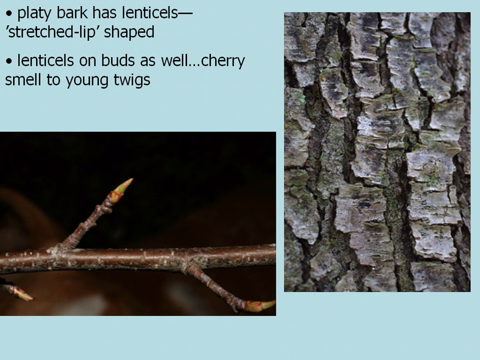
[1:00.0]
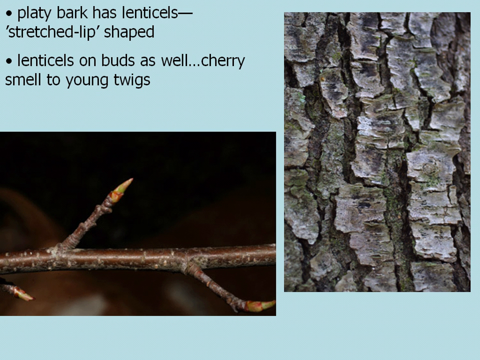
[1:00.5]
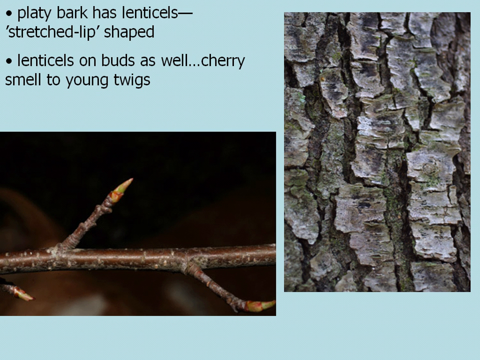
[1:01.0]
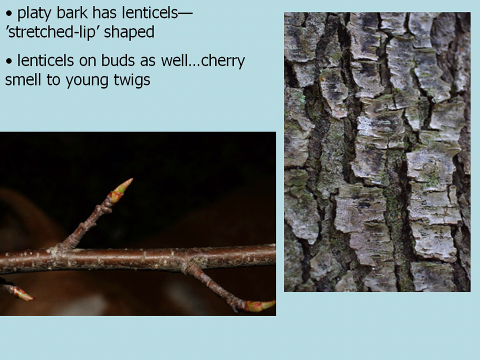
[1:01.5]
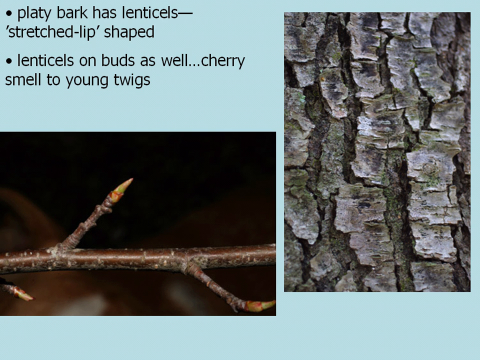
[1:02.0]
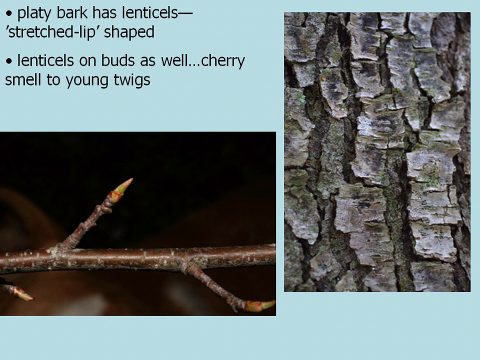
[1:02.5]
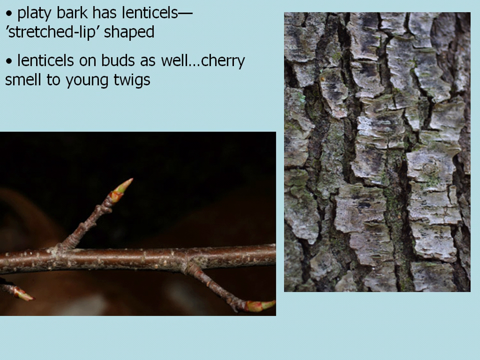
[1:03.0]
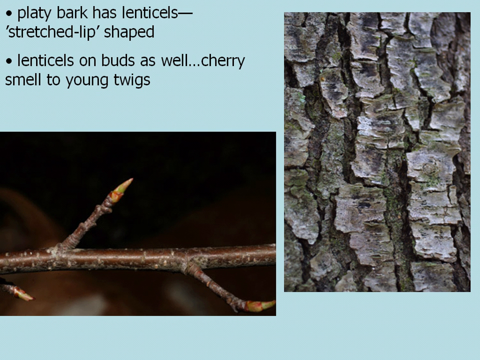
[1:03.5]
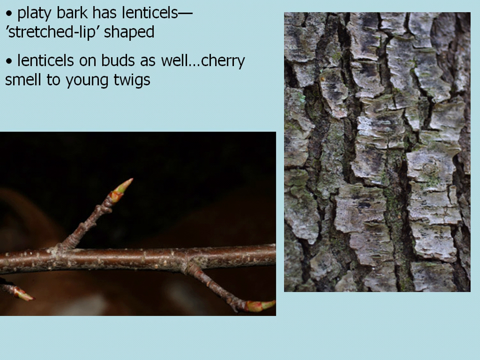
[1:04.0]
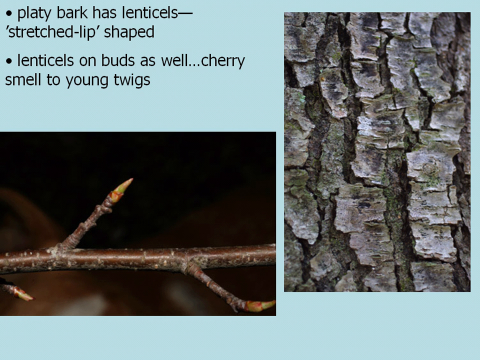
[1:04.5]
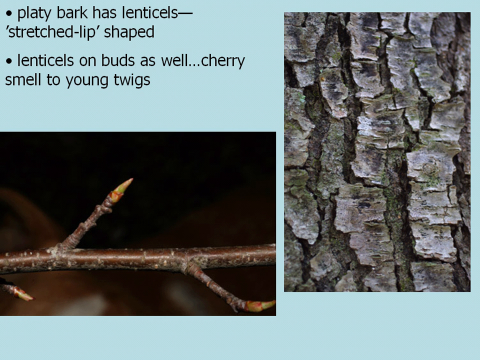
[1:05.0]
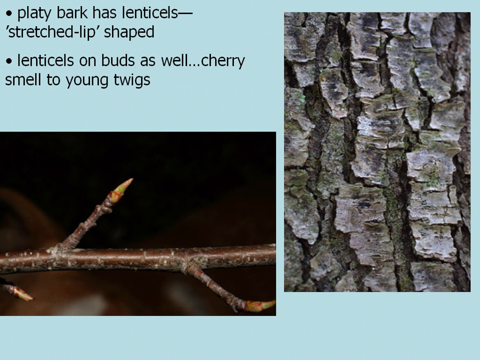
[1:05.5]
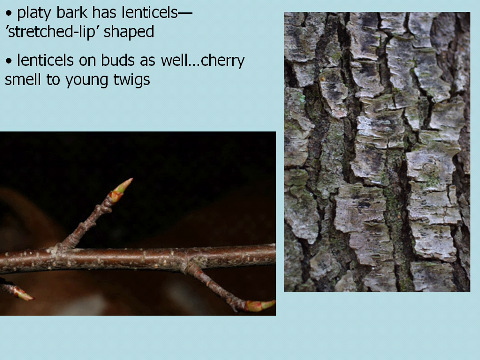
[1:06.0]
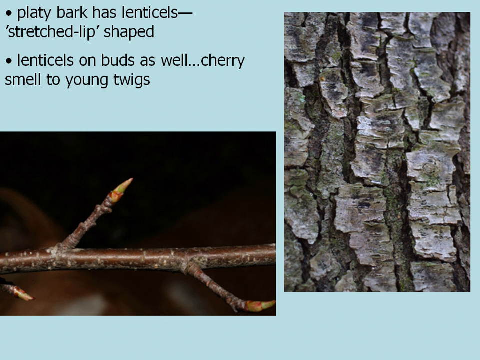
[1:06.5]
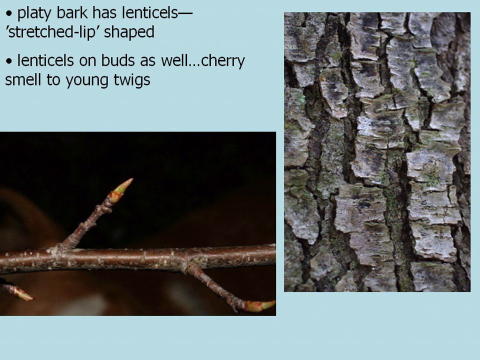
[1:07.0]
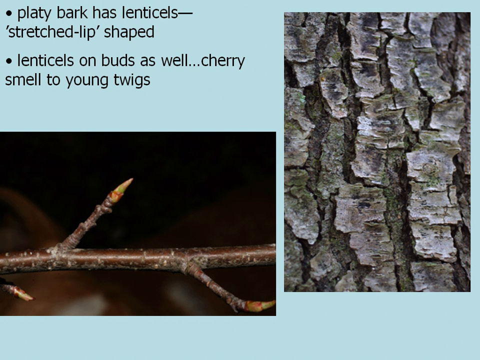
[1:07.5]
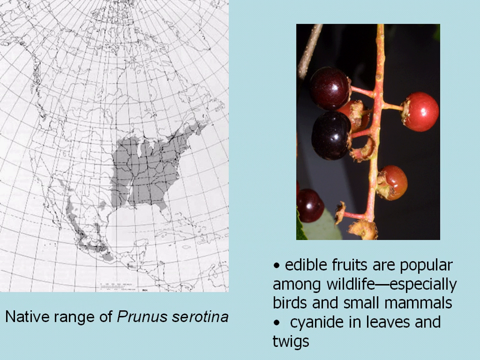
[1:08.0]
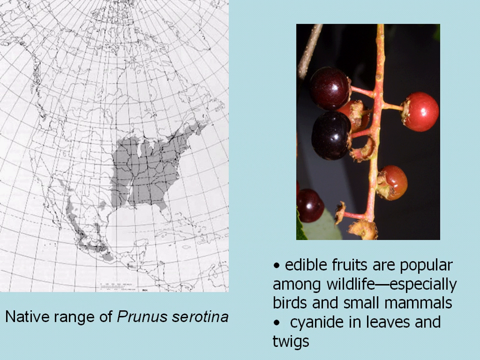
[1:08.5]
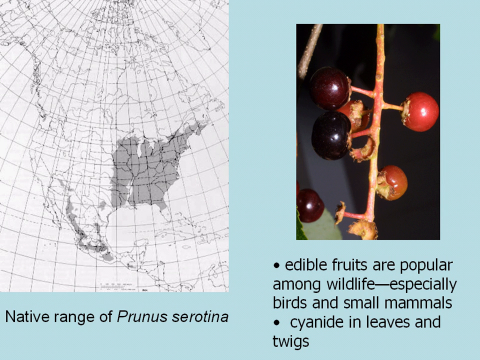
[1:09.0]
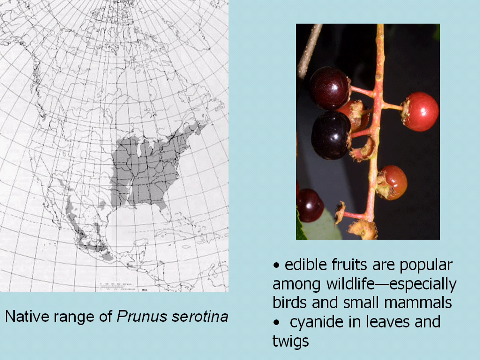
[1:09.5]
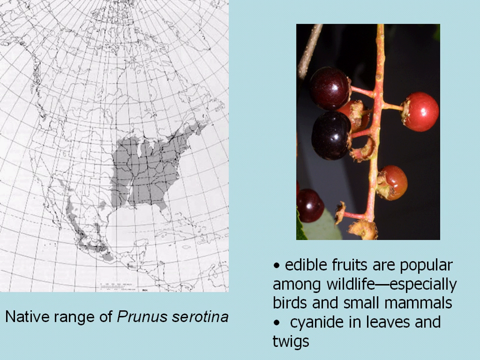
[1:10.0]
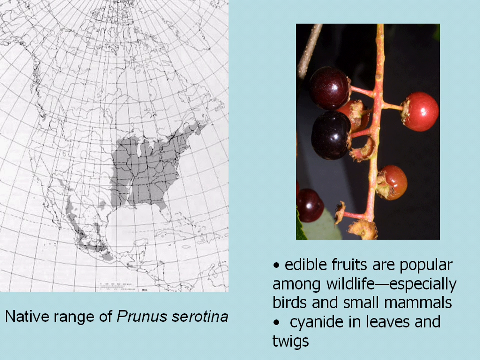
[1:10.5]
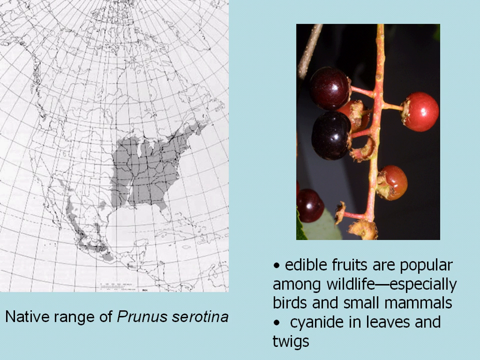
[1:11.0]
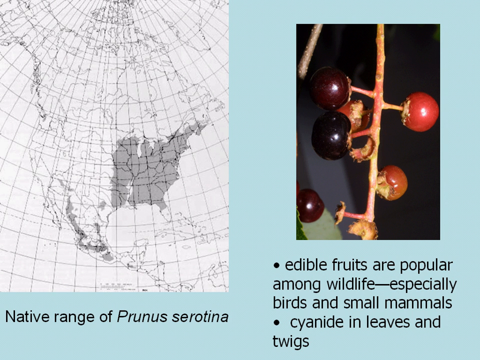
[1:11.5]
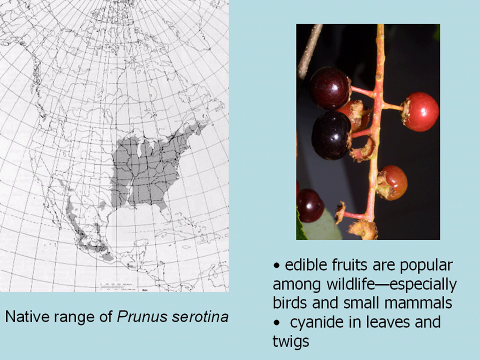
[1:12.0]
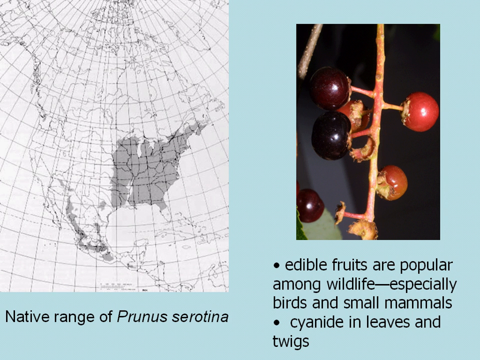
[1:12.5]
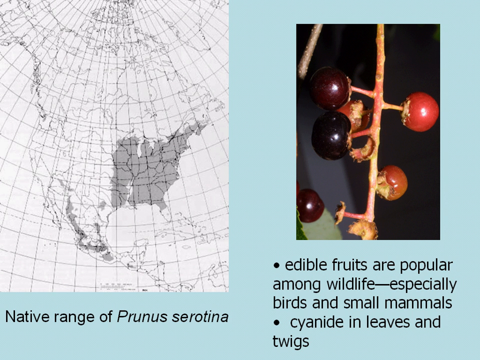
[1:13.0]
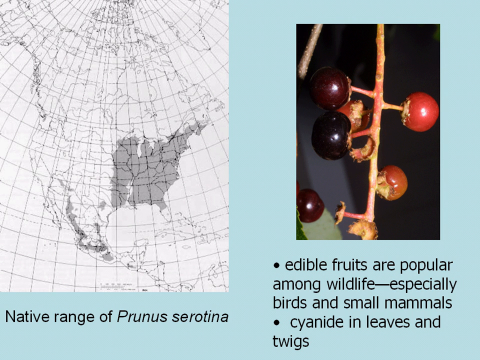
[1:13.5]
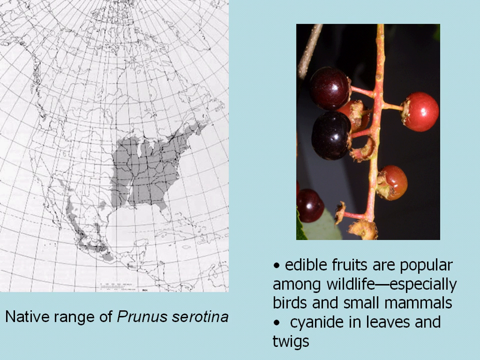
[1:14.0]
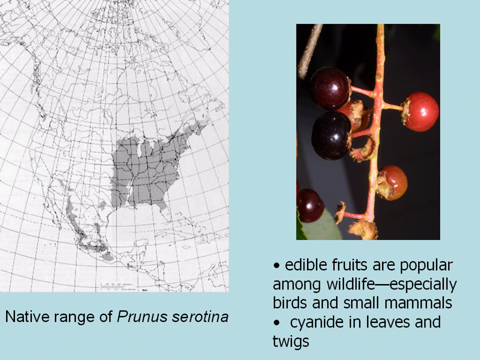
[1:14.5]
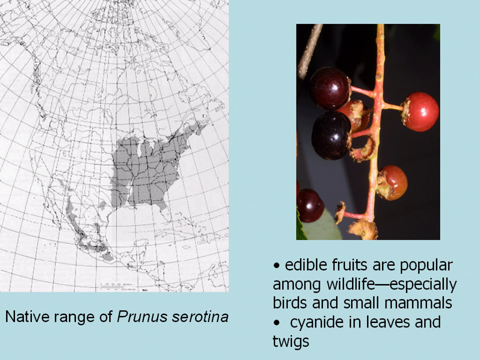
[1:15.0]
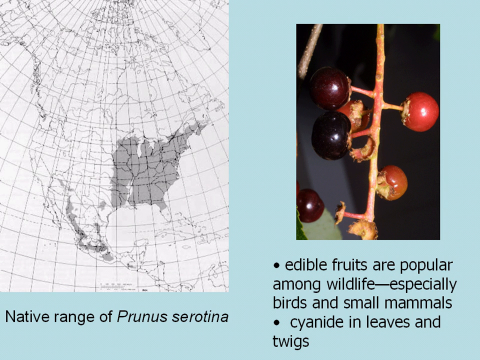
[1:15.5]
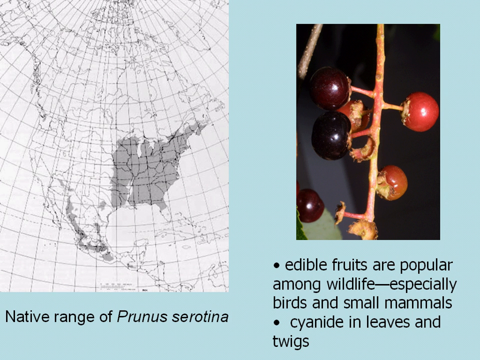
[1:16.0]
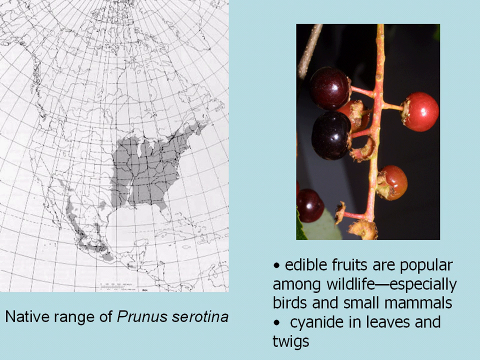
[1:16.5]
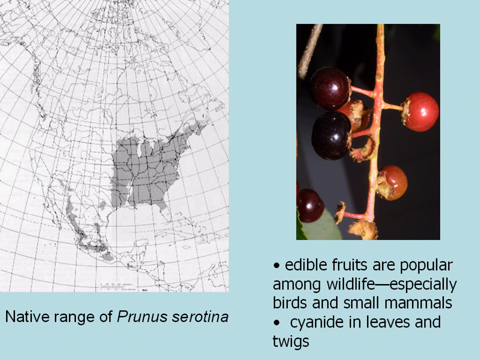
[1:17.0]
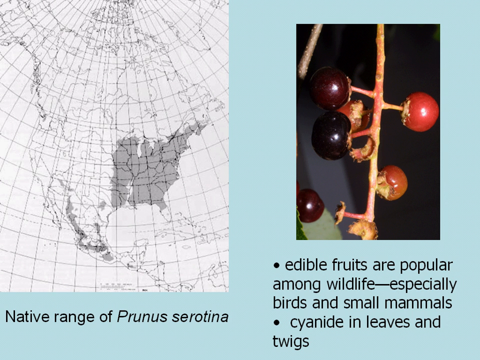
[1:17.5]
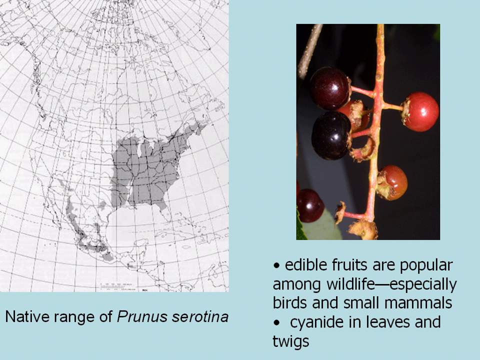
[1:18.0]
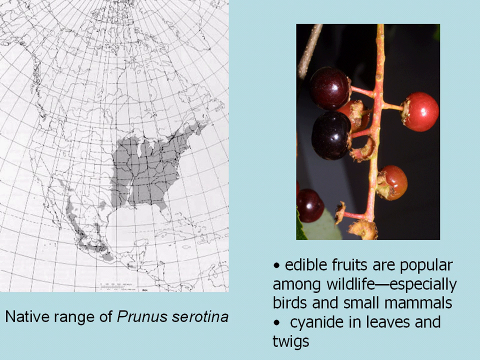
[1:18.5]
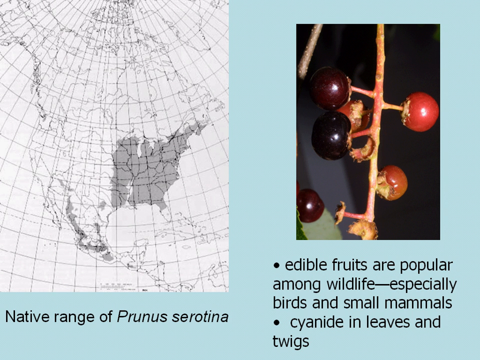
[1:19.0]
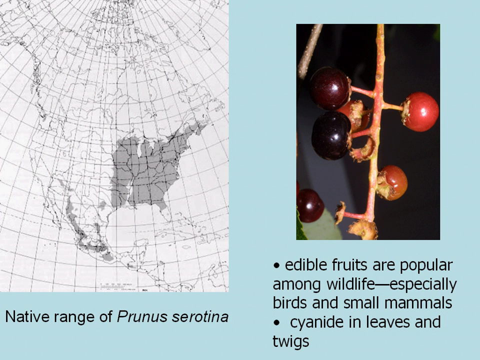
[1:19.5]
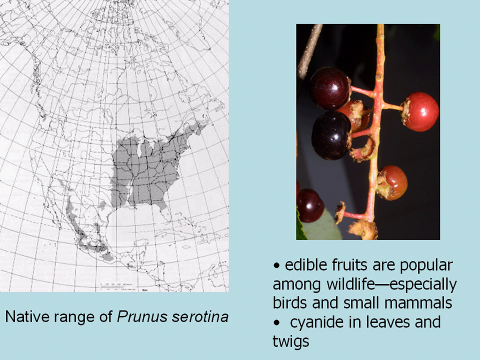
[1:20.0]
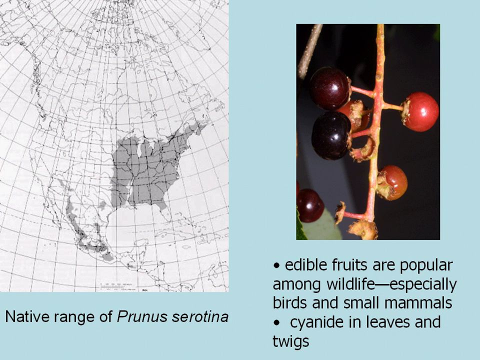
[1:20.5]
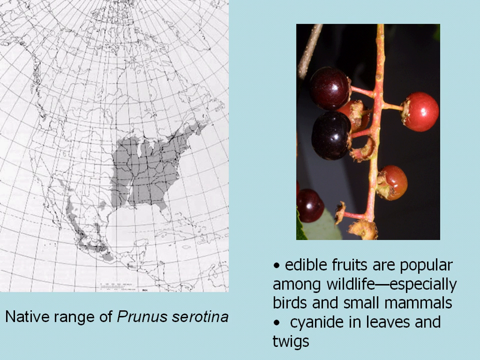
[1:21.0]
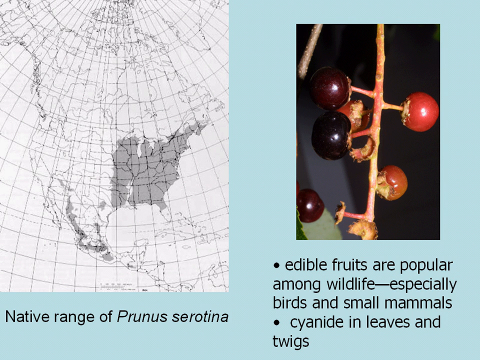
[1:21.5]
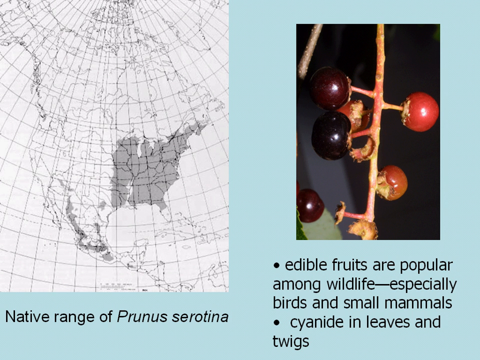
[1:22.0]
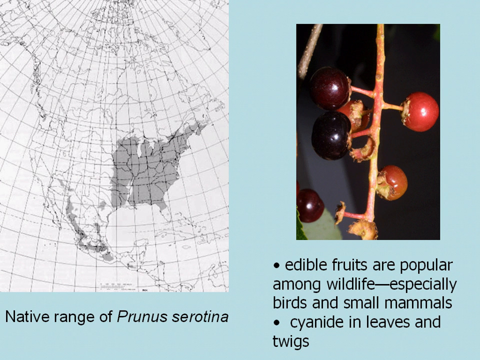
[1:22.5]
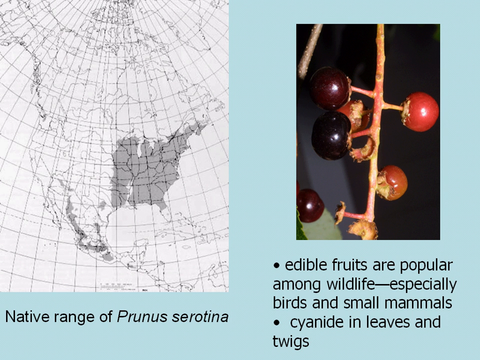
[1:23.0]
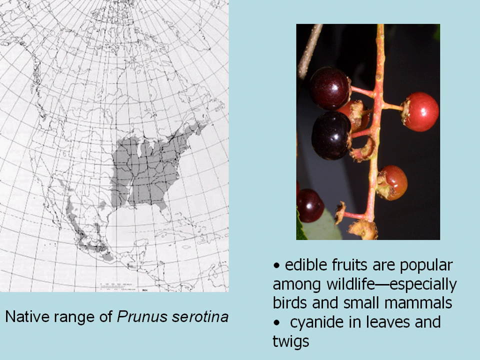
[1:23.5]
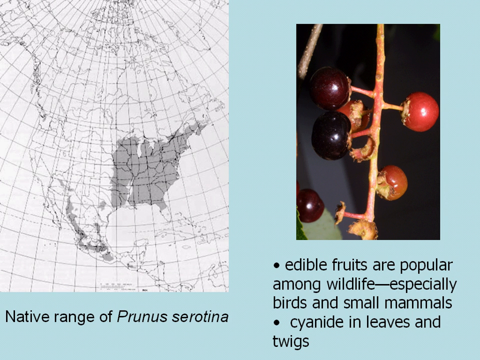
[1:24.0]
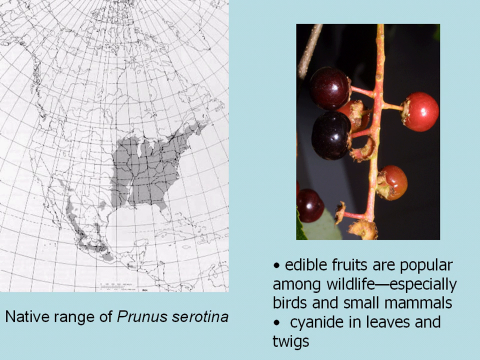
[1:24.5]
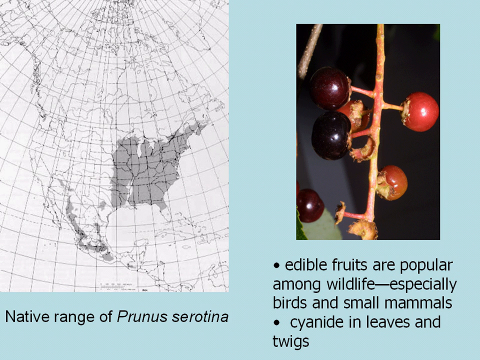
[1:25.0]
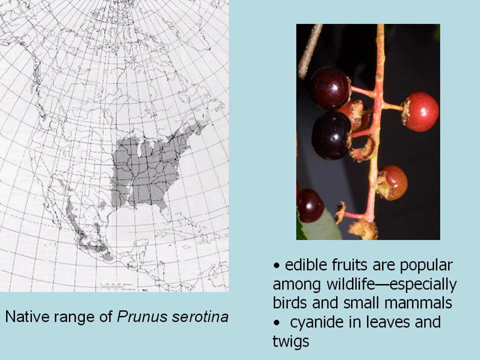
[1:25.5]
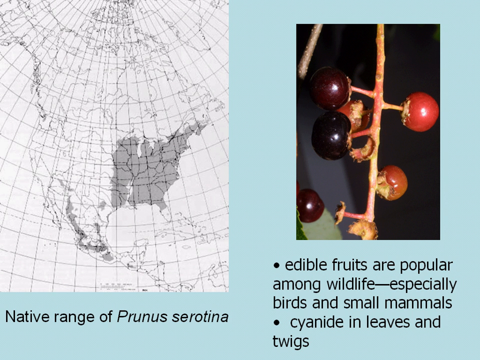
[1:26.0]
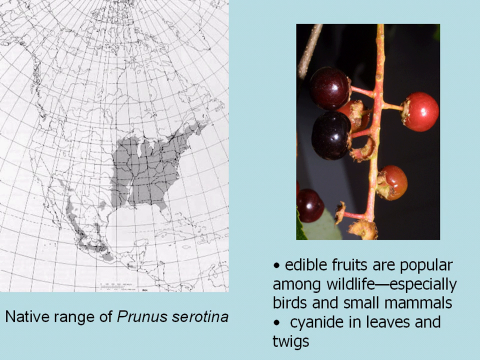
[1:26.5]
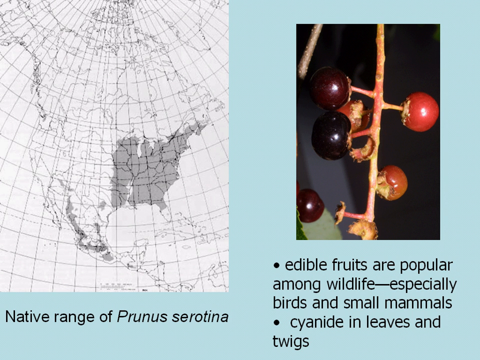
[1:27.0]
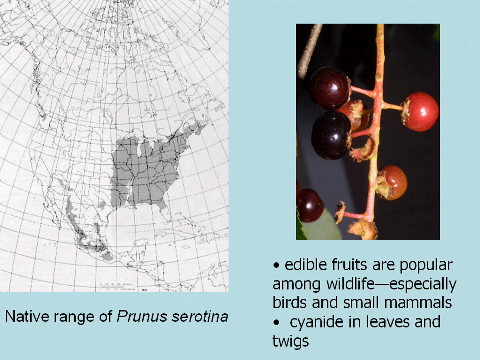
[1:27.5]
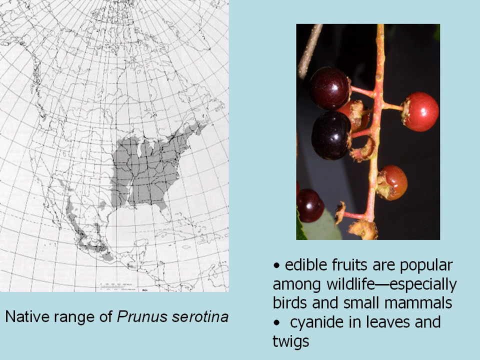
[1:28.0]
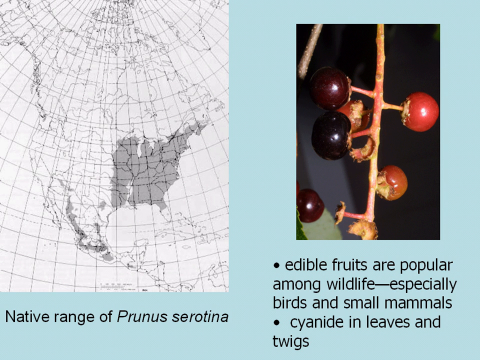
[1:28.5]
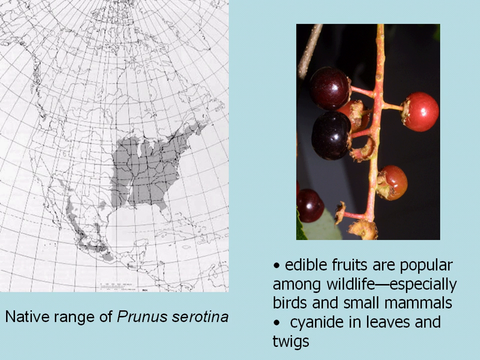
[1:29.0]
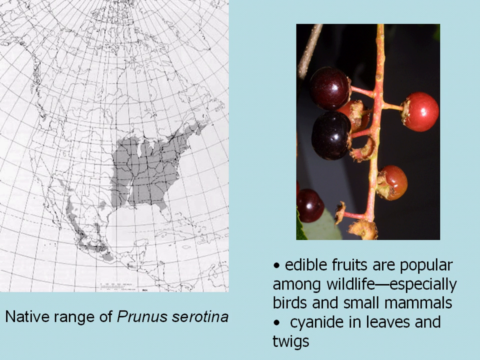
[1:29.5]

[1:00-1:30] The pictures change to an atlas-like map showing countries, with edible fruits on the right. There are five fruits in different colours: maroon, a dark black or purple, and red. Below, near the atlas, the text reads "native range of Prunus serotina." On the right, under the edible fruits, two bullet points read "edible fruits are popular among wildlife, especially birds and small mammals" and "cyanide in leaves and twigs." Nothing else appears besides the two pictures and the text placed below them.